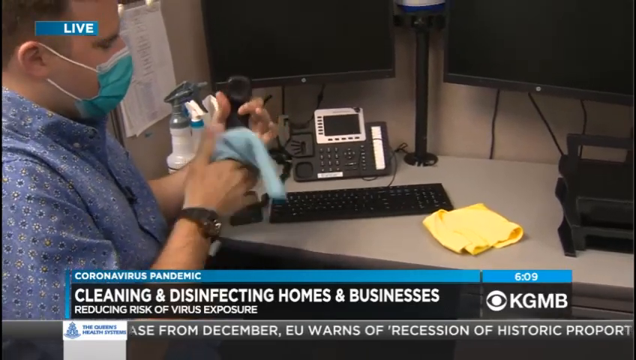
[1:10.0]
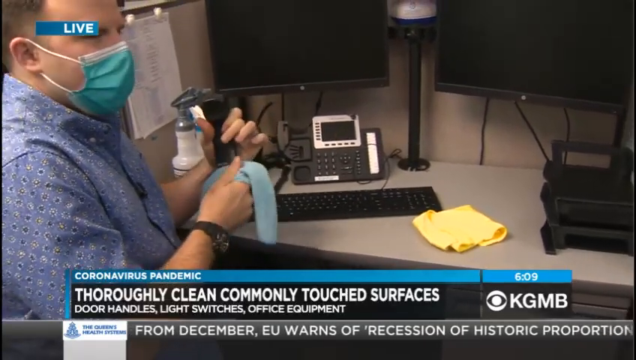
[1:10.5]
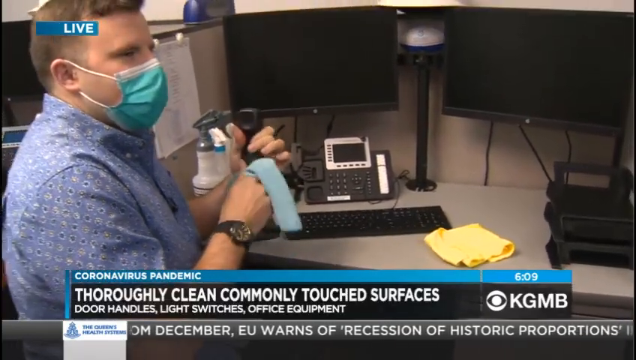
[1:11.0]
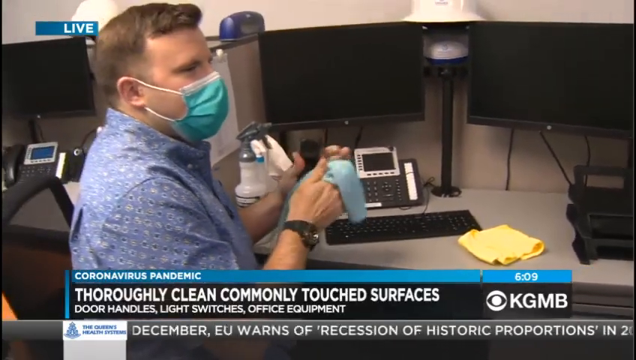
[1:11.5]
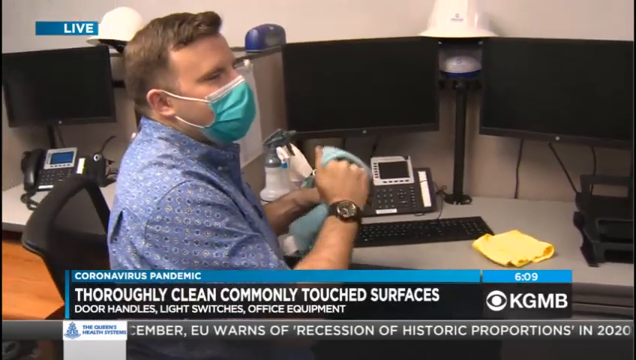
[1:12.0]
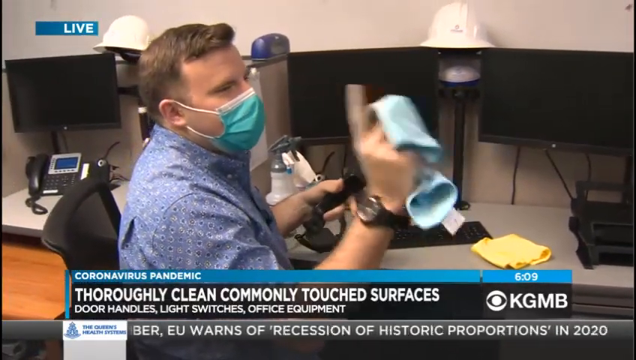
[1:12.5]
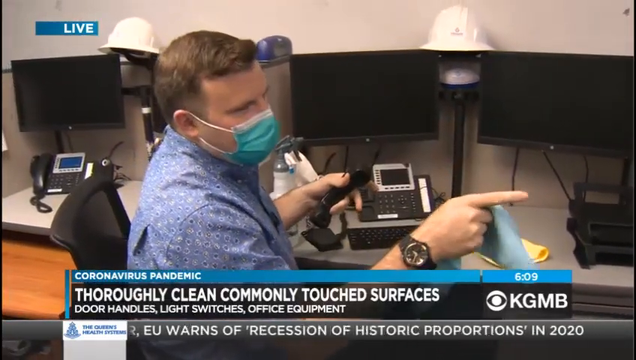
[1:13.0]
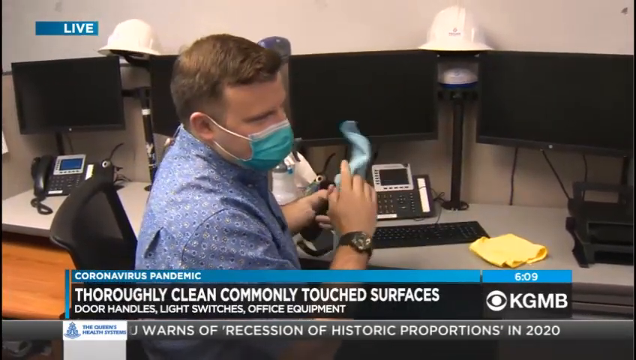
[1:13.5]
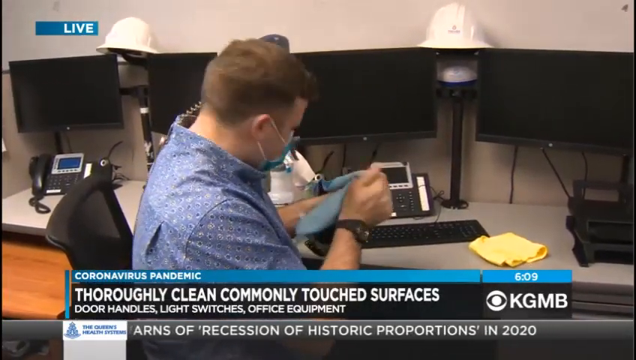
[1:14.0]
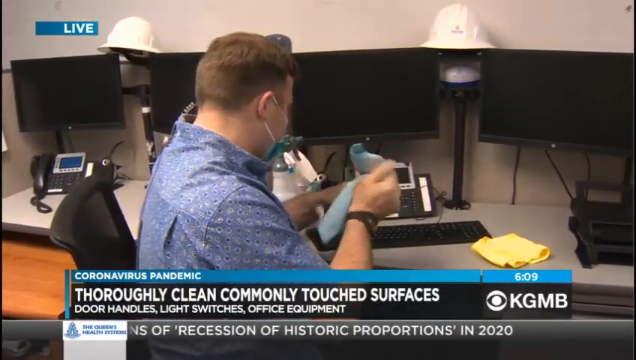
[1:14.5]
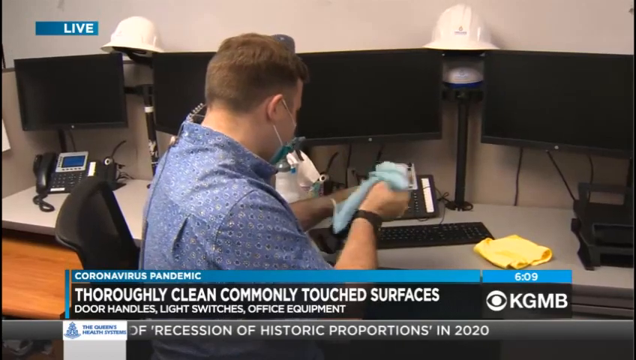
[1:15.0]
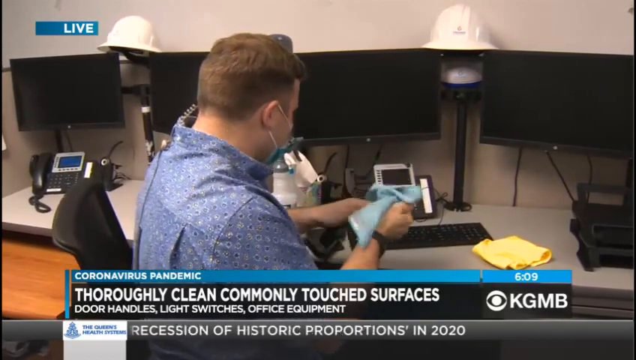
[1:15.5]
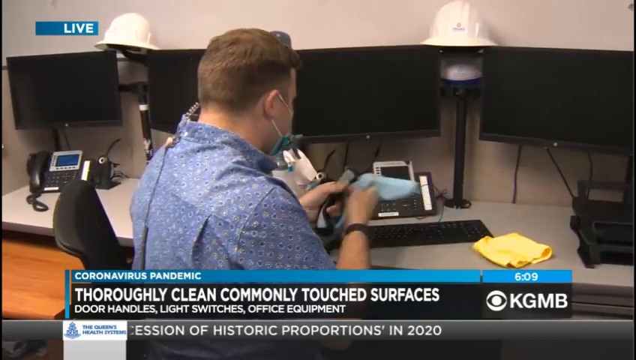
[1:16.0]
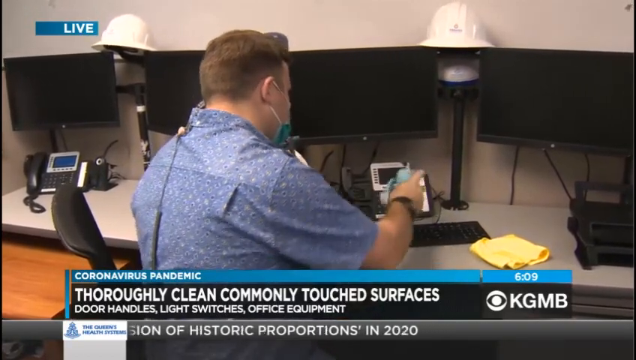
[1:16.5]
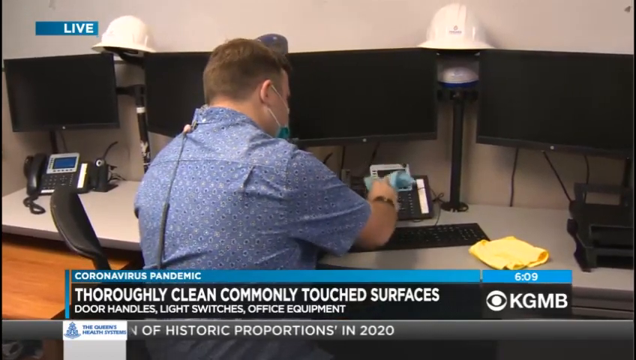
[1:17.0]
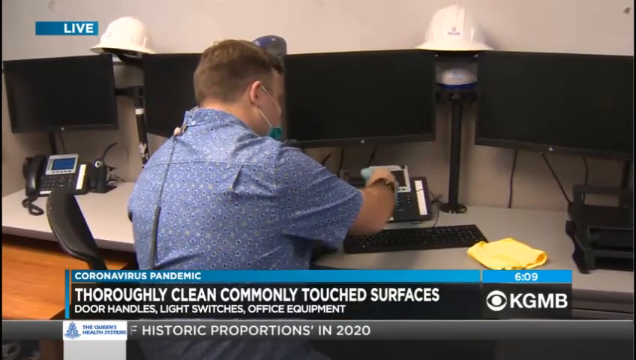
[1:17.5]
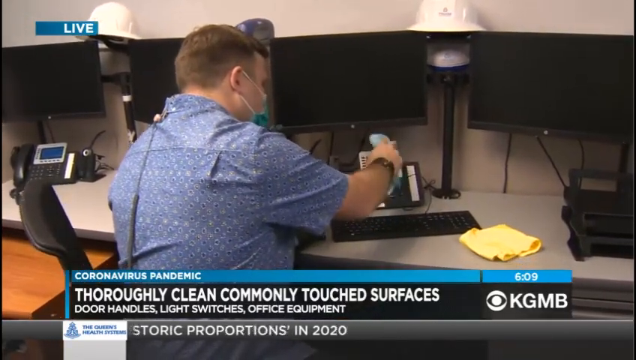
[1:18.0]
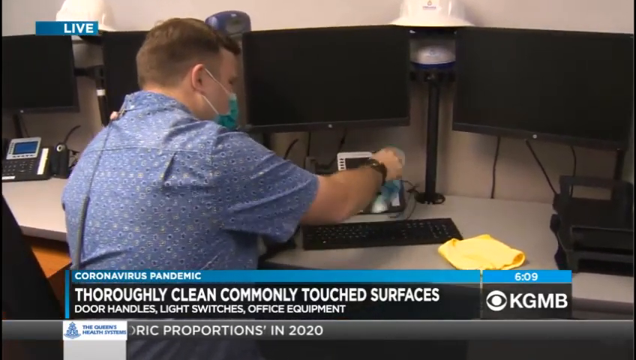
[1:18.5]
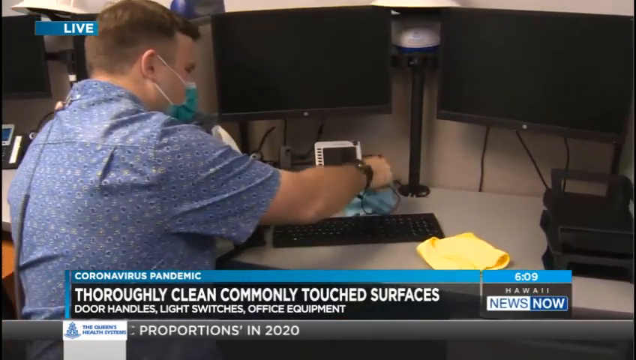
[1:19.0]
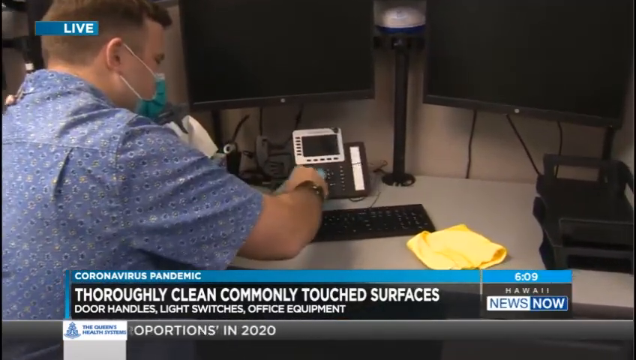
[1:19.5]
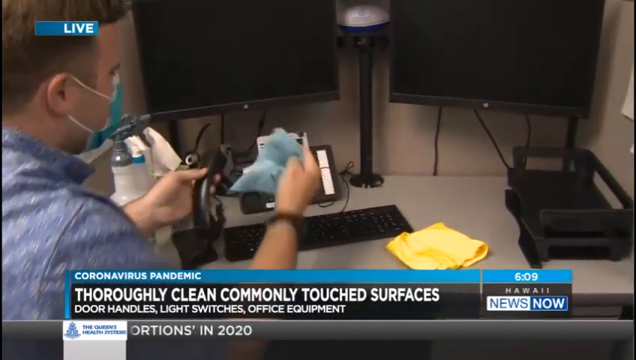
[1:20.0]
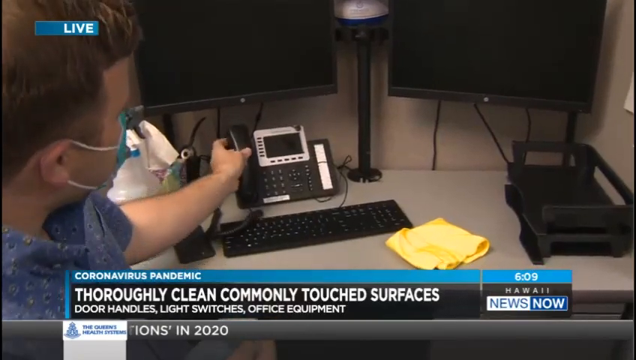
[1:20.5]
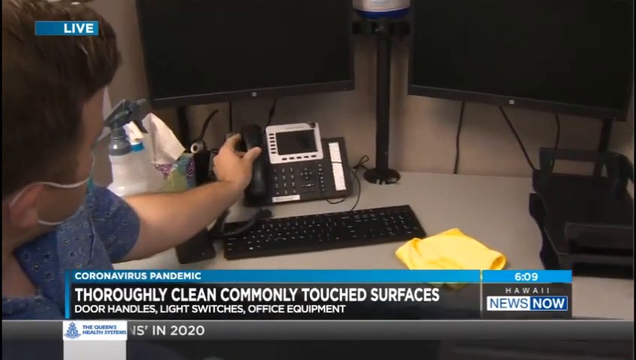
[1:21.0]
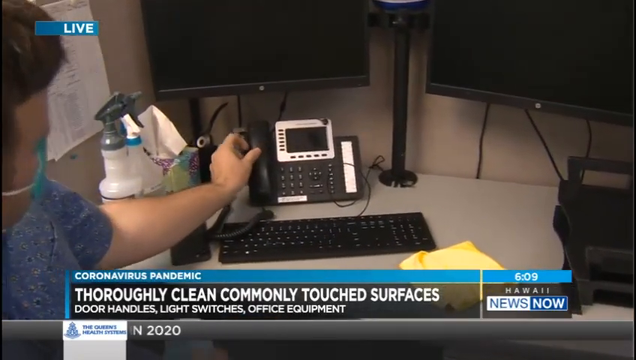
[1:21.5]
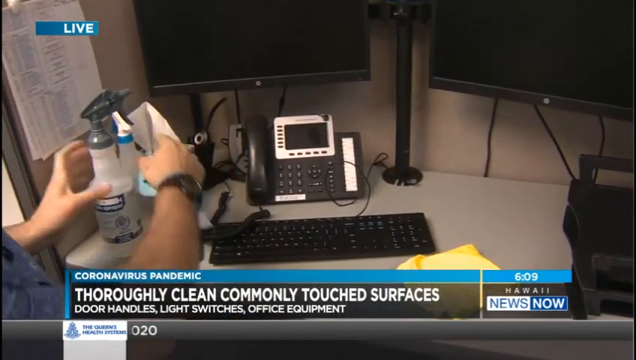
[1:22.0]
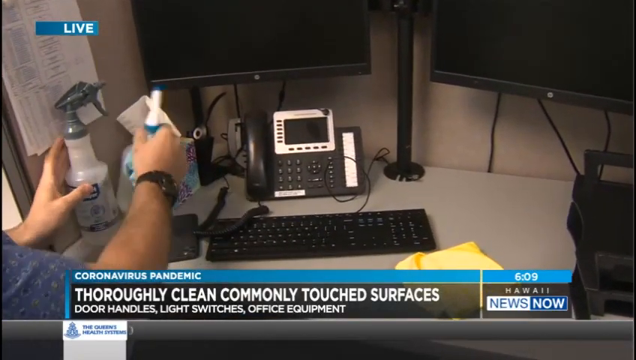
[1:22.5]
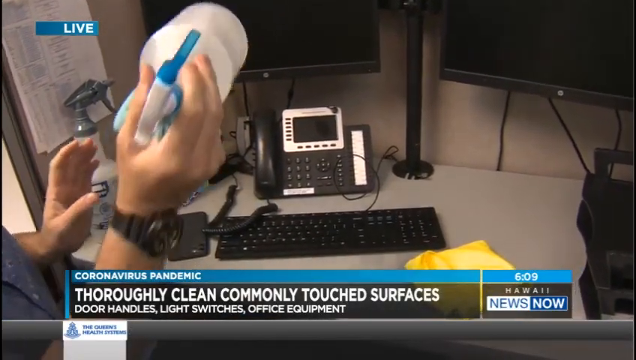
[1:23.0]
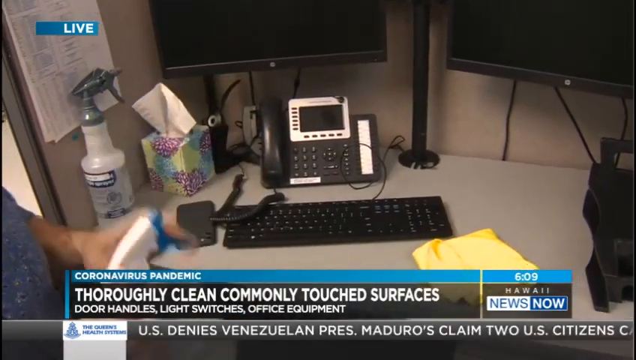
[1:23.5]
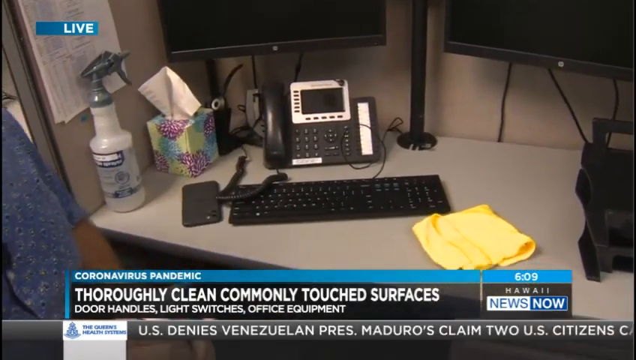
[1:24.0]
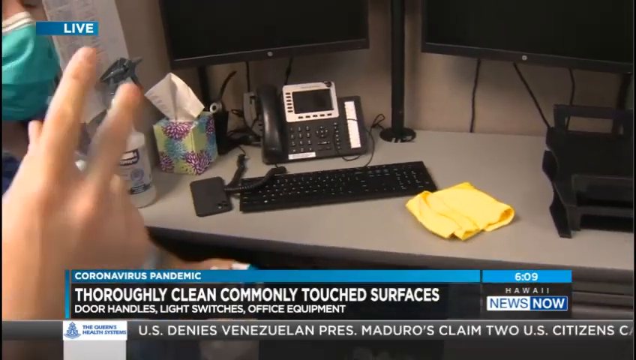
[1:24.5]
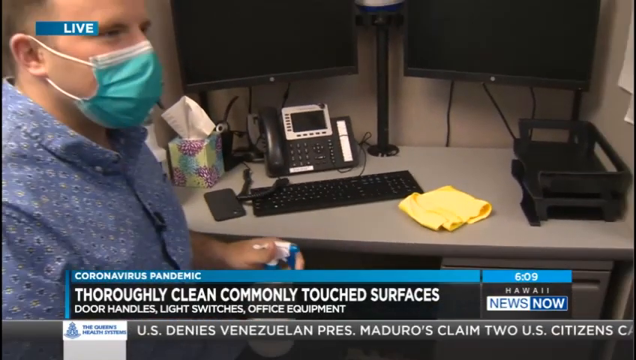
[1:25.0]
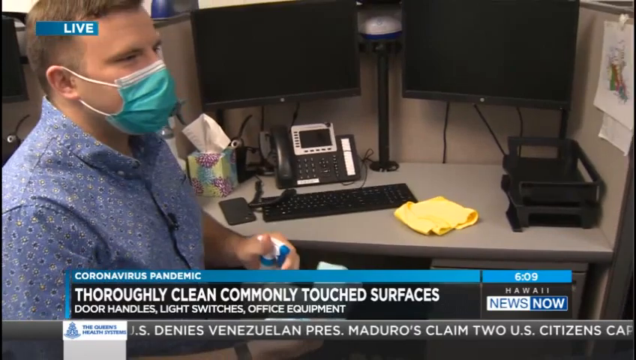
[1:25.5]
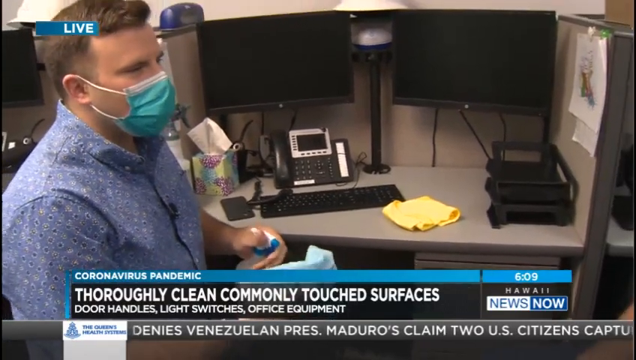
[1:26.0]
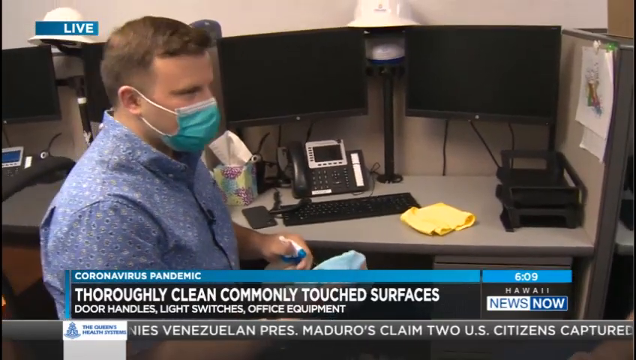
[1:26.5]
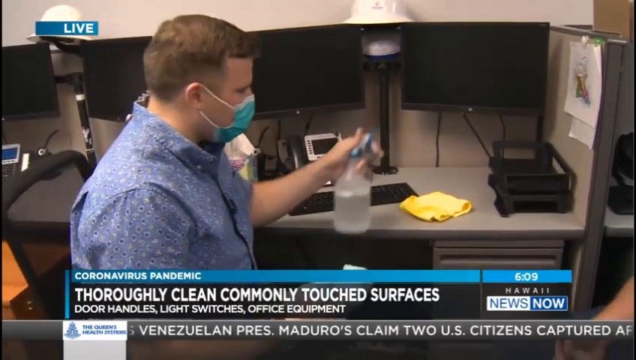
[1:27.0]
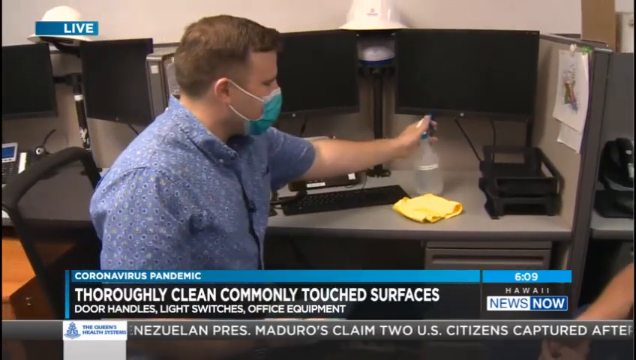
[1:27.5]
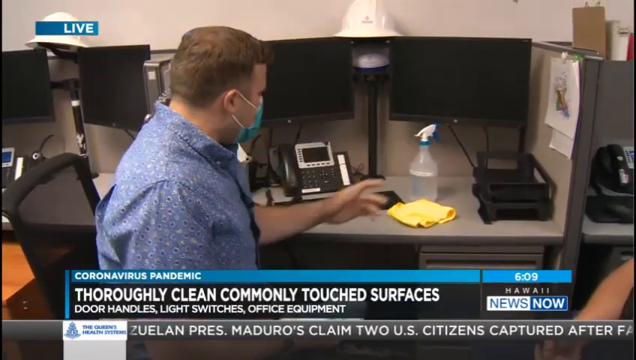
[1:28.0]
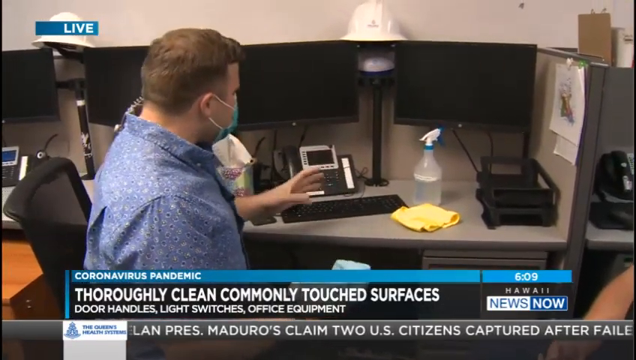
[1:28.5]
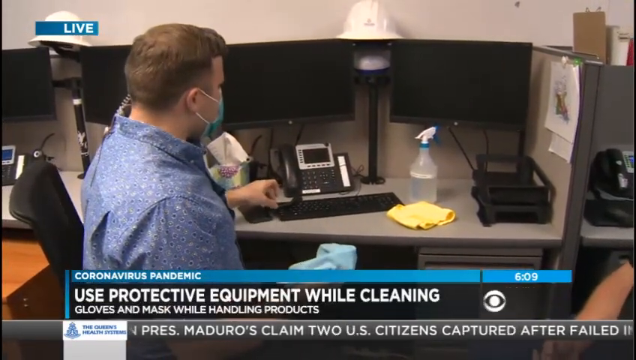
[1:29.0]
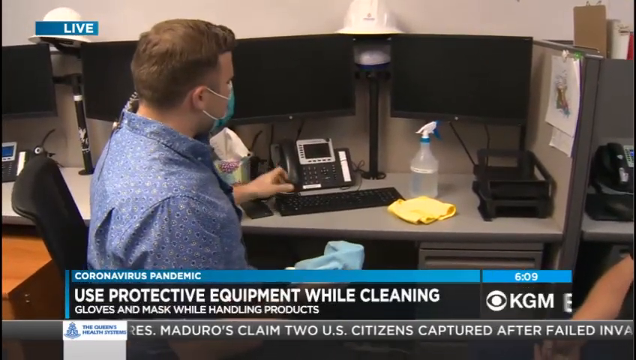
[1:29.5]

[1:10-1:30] The camera zooms by the man on the left as he grabs the blue towel and continues wiping down the phone. Text in the lower left corner reads "coronavirus pandemic", "thoroughly clean commonly touch surfaces" and "door handles light switches office equipment". He wipes the entire phone, then grabs a spray bottle with his left hand and sprays the liquid onto a blue towel. News updates along the bottom center read "December", "EU warns of recession of historic proportions in 2020", "US denies Venezuelan" and "Maduro's claim to US citizens". White helmets are on top of the computer monitors, and the word "live" appears in blue and white in the upper left corner. The rectangular video is filmed indoors with plenty of artificial light.